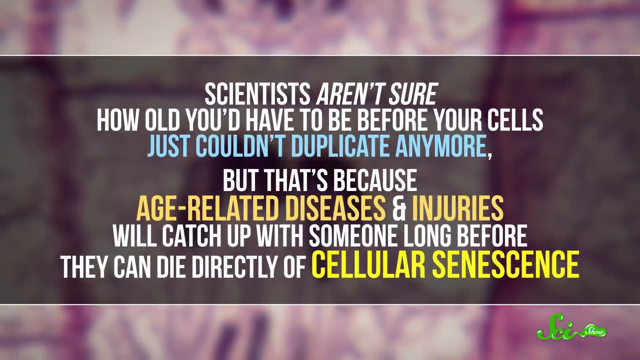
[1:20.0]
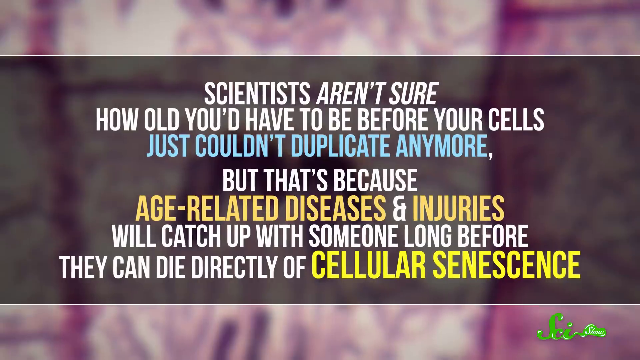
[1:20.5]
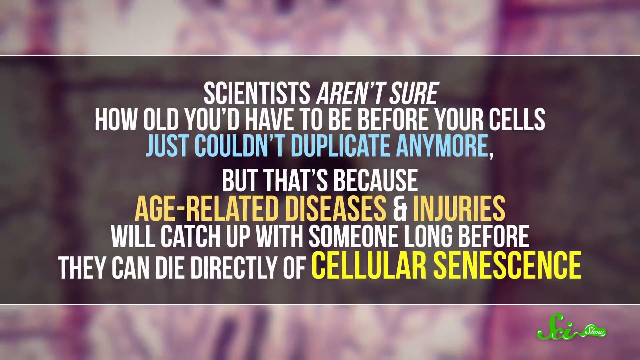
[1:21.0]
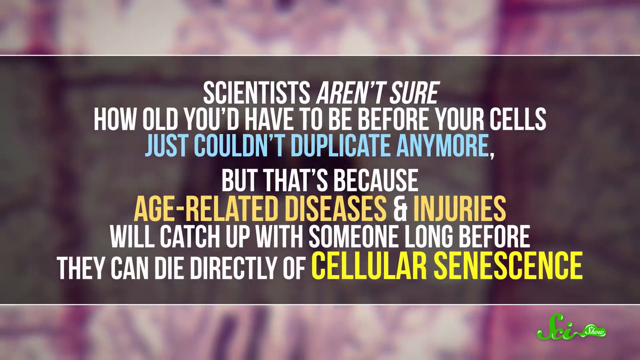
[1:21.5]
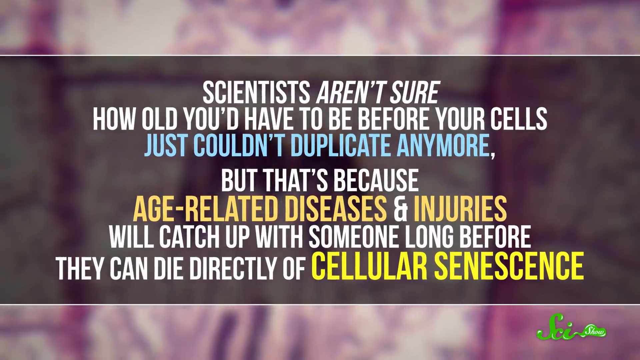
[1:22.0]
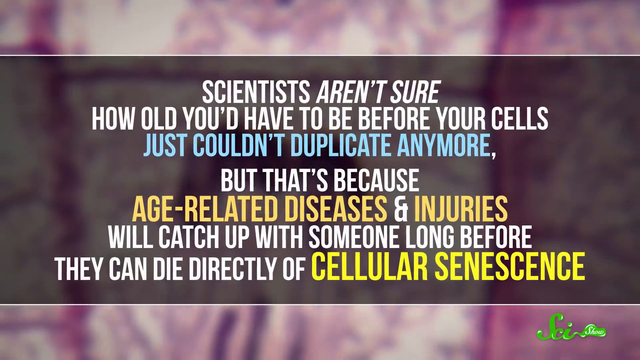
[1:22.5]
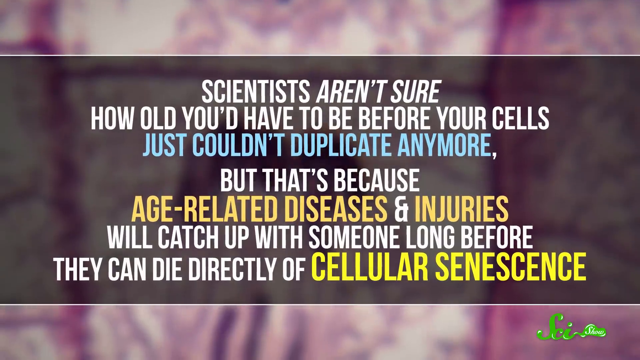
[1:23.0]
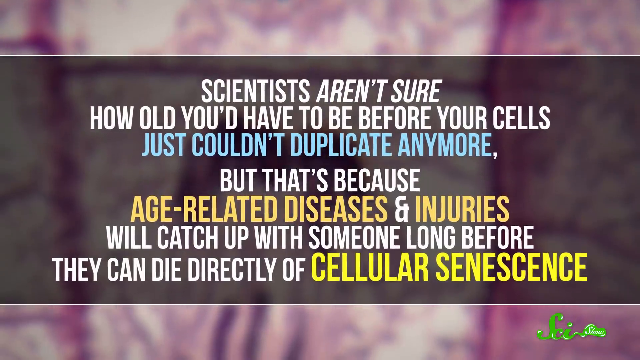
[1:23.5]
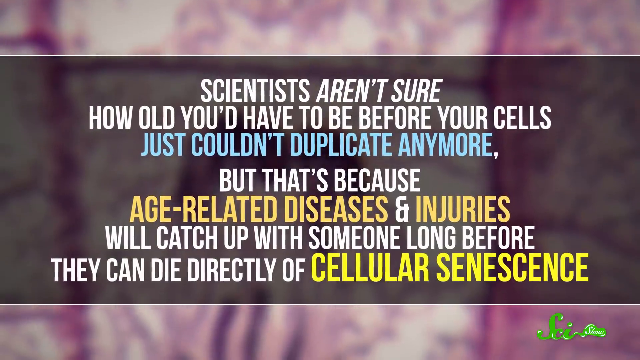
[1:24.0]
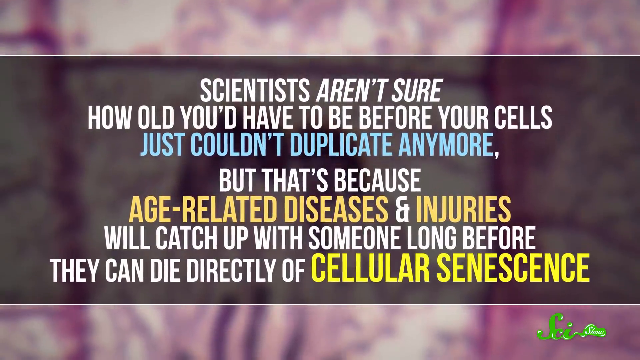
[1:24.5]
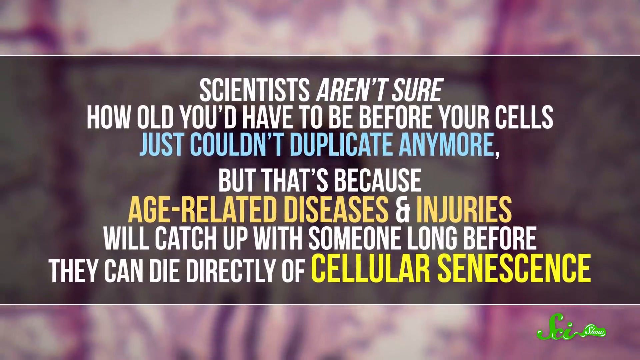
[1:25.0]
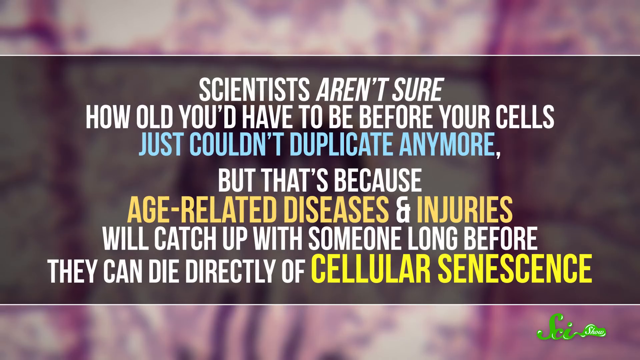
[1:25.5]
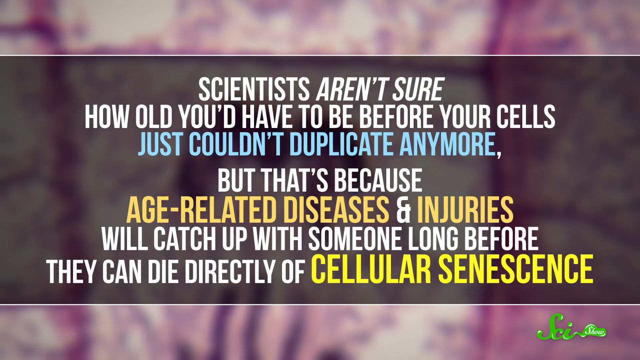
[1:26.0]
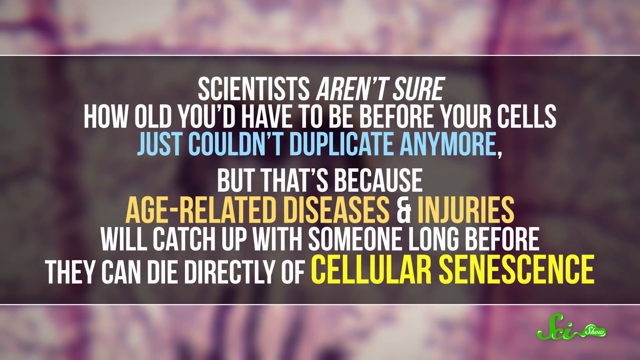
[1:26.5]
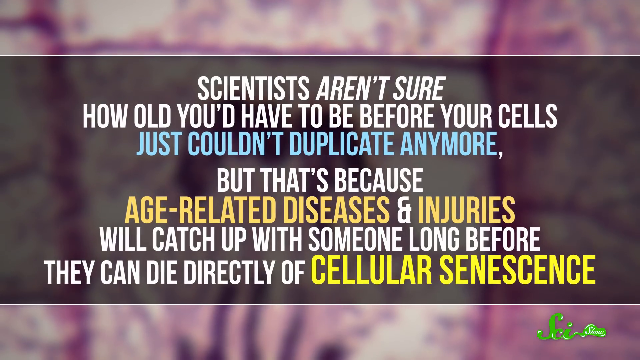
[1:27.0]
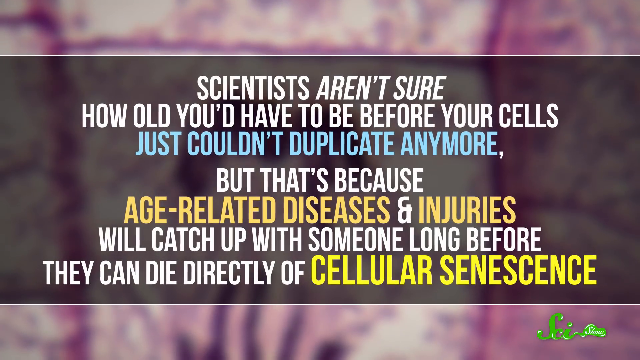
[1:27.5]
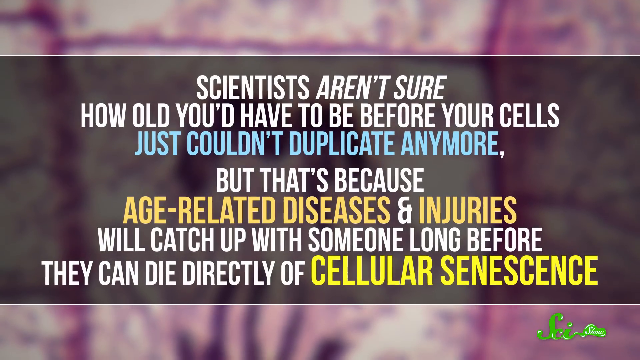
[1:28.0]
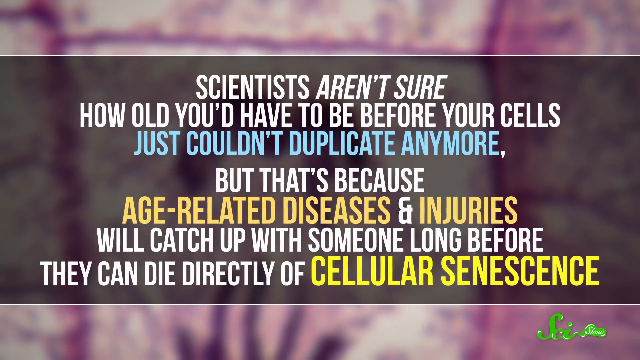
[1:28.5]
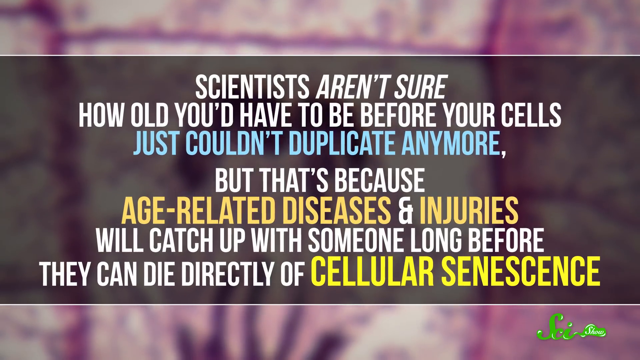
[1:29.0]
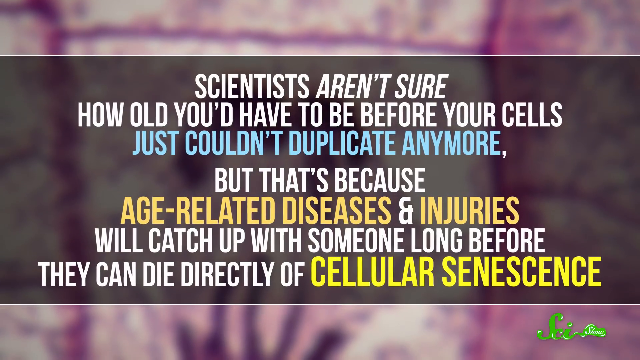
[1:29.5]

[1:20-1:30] Words on the screen read "As someone gets older and damage from all these sources pile up" and "Scientists aren't sure how old you'd have to be before your cells just couldn't duplicate anymore, but that's because age-related diseases and injuries will catch up with someone long before they can die directly of cellular senescence." A further set of words about cellular health and science appears. The words are in light blue, dark yellow, bright yellow and white. The SciShow logo is in the bottom right corner.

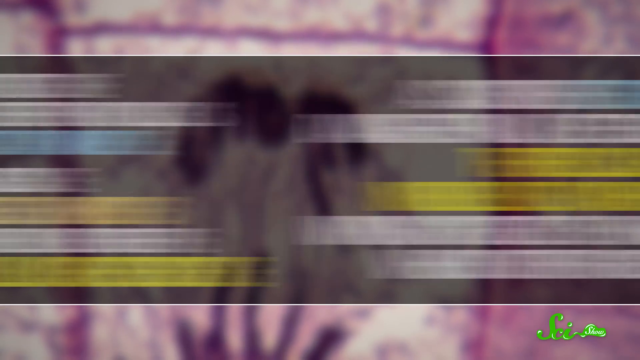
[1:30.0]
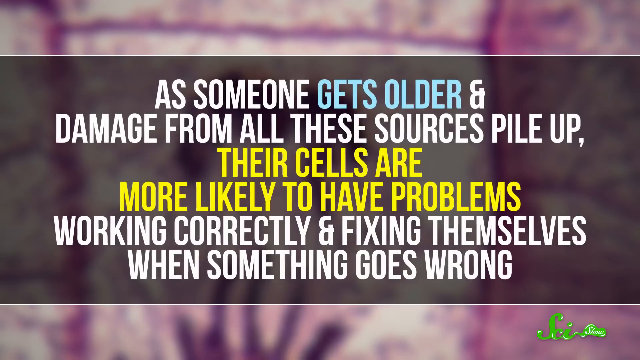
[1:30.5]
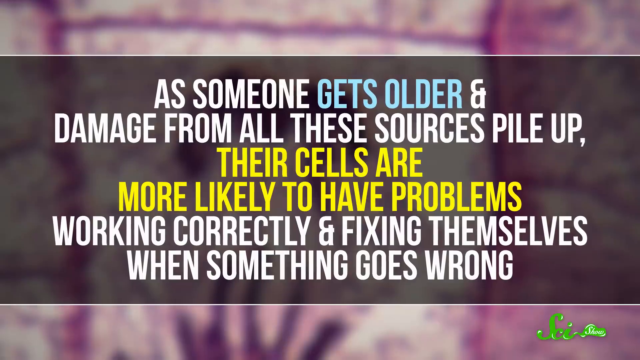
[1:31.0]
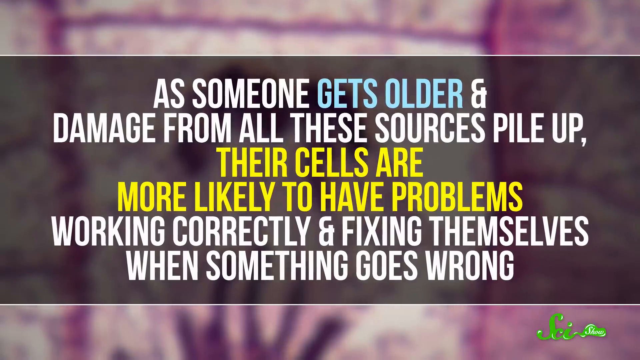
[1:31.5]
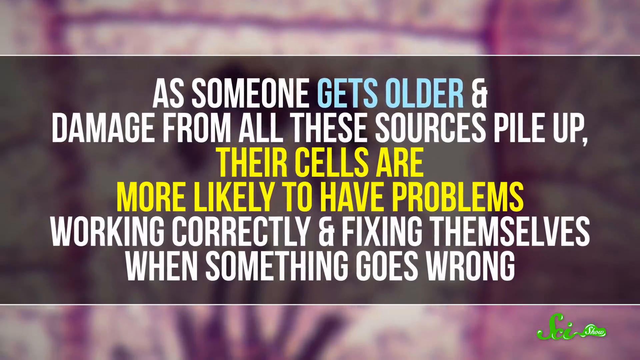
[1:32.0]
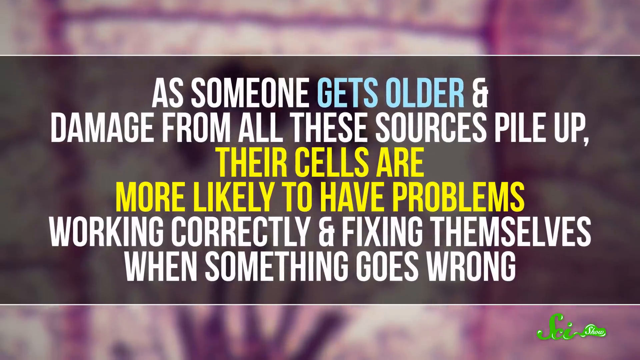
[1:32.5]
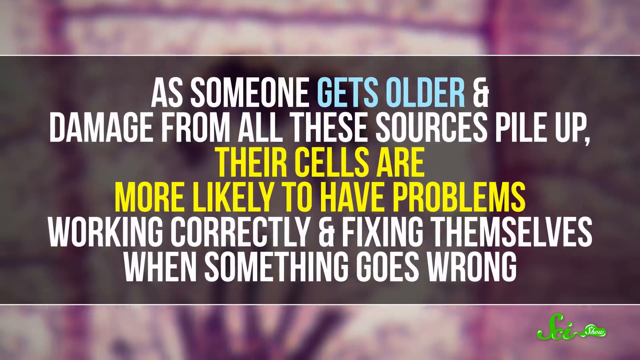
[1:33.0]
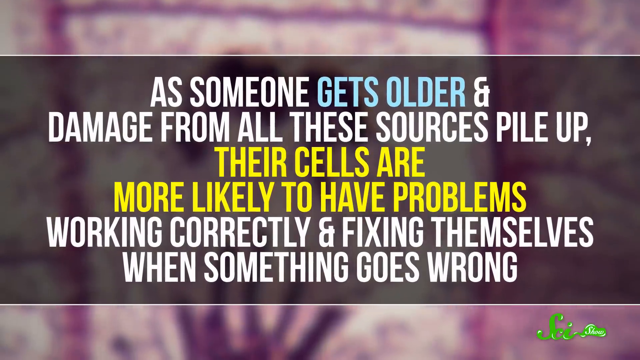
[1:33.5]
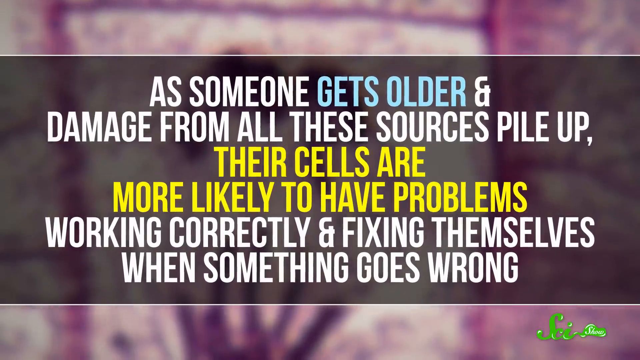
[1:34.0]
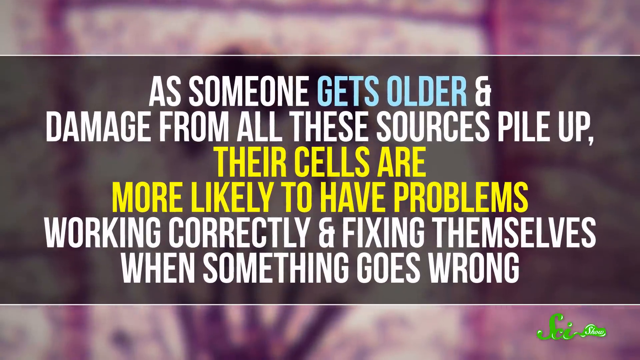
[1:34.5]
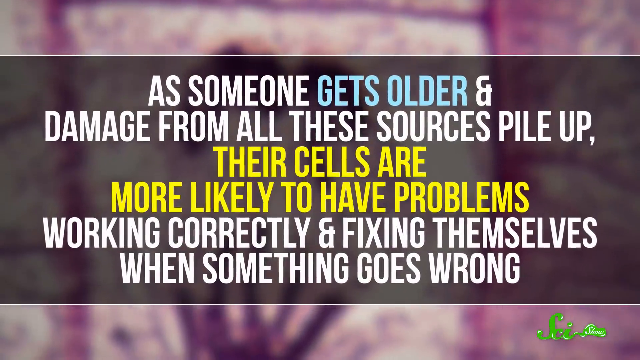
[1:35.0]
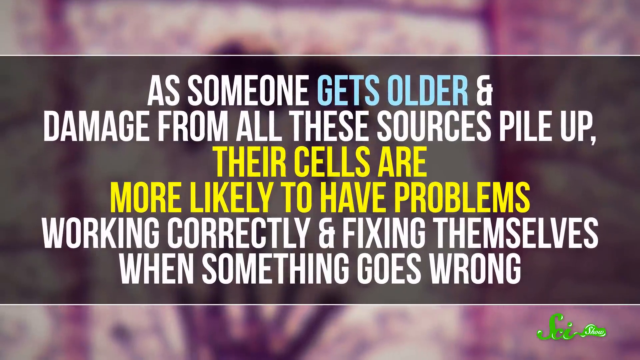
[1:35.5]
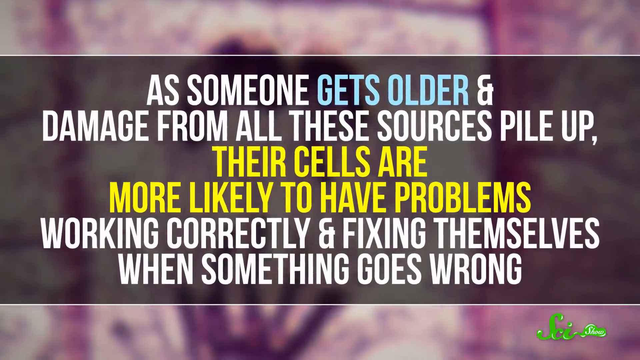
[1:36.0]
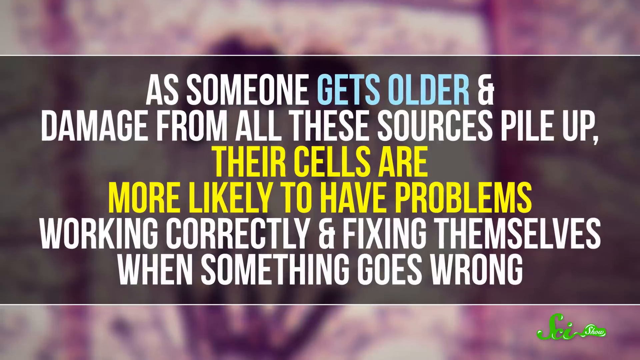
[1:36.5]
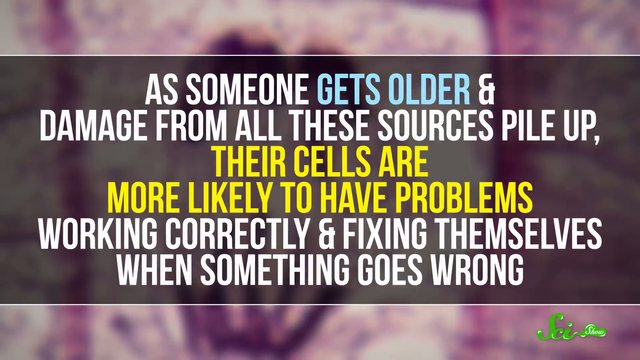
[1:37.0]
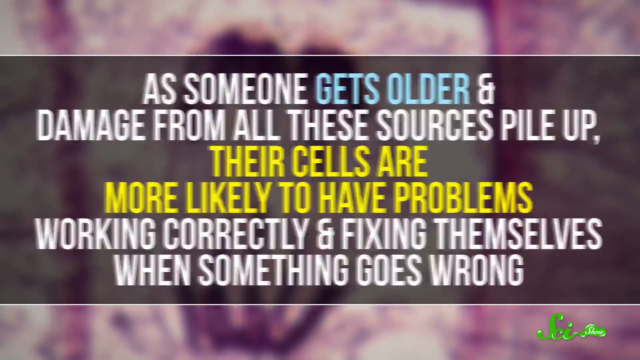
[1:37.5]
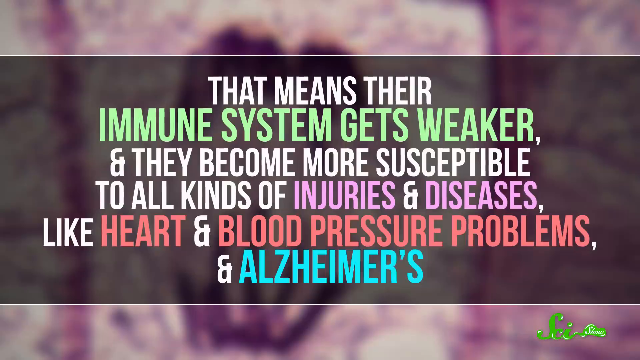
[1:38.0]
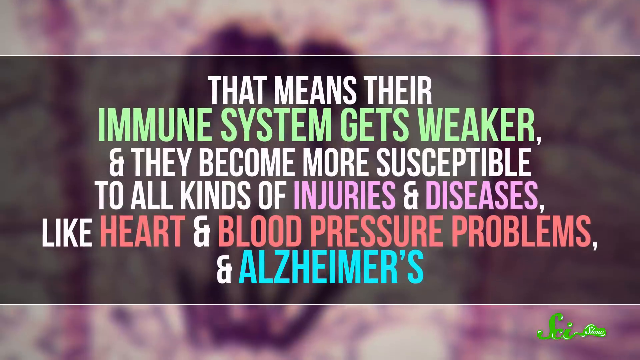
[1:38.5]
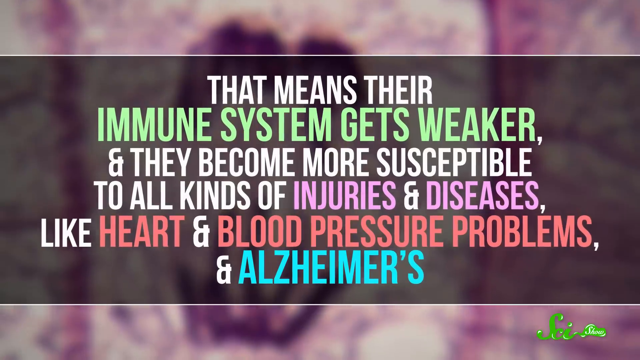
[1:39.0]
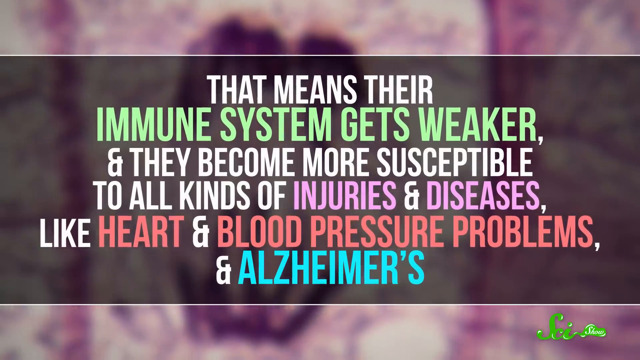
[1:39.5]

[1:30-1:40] Words on the screen read "As someone gets older and damage from all these sources pile up, their cells are more likely to have problems working correctly and fixing themselves when something goes wrong." The words are white, light blue and yellow, set against a blurry background, and remain on screen for several seconds. Then a small paragraph appears against the same background reading "That means their immune system gets weaker, and they become more susceptible to all kinds of injuries and diseases, like heart and blood pressure problems and Alzheimer's." "Alzheimer's" is in blue, "heart and blood pressure problems" in red, "injuries" and "diseases" in purple, and "immune system gets weaker" in green.